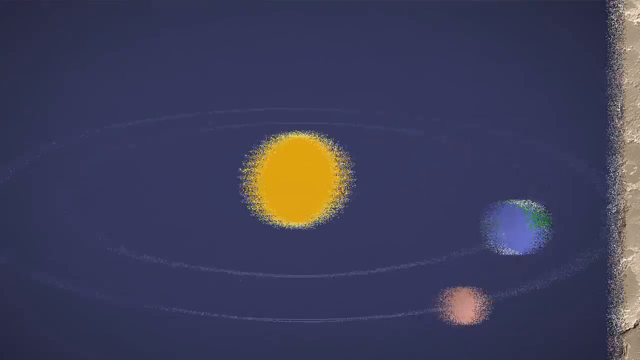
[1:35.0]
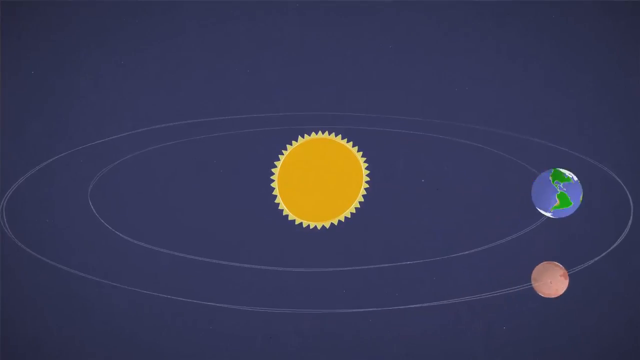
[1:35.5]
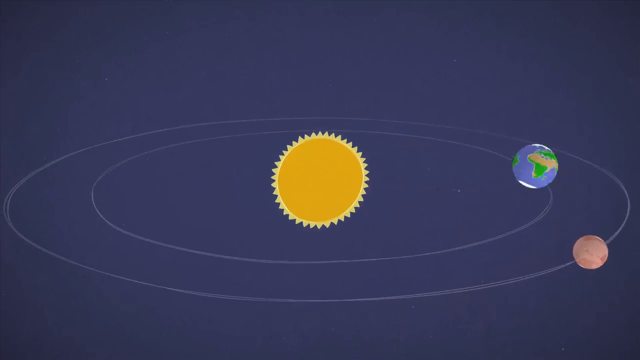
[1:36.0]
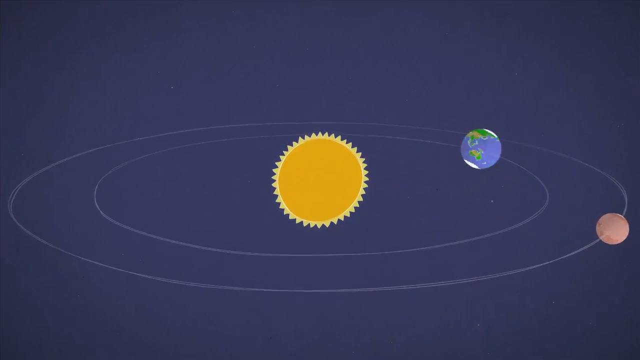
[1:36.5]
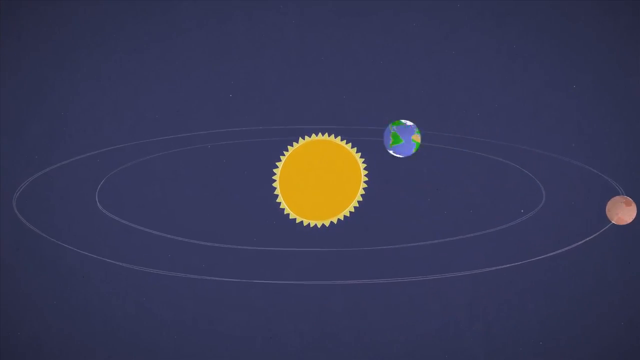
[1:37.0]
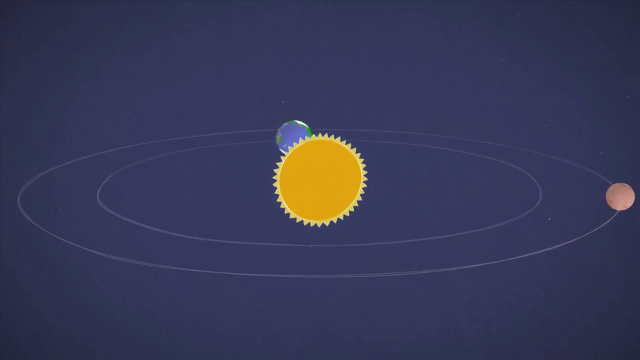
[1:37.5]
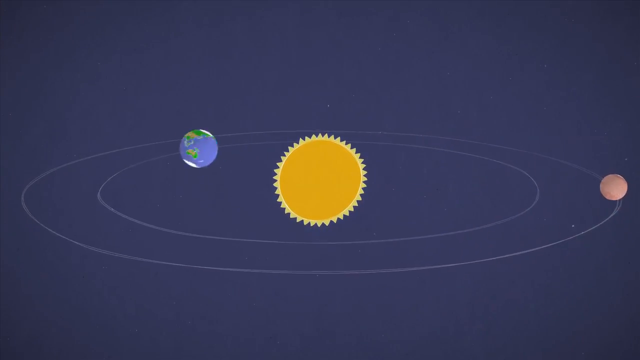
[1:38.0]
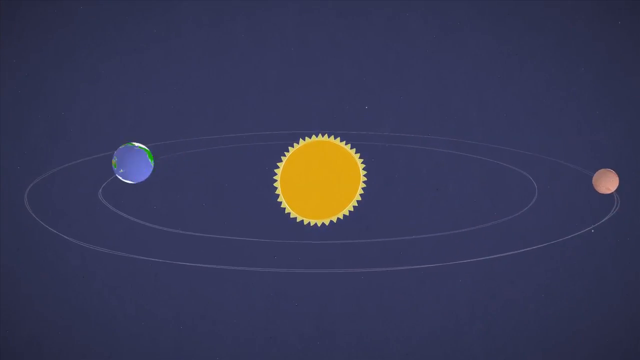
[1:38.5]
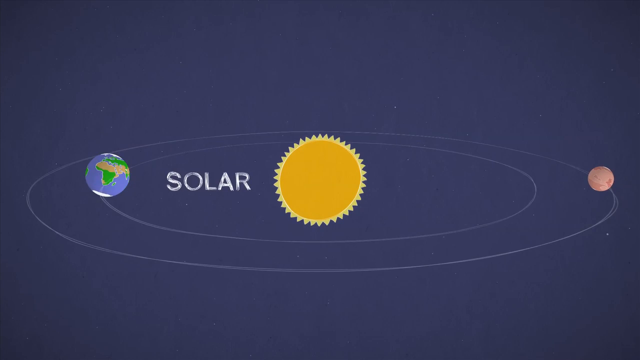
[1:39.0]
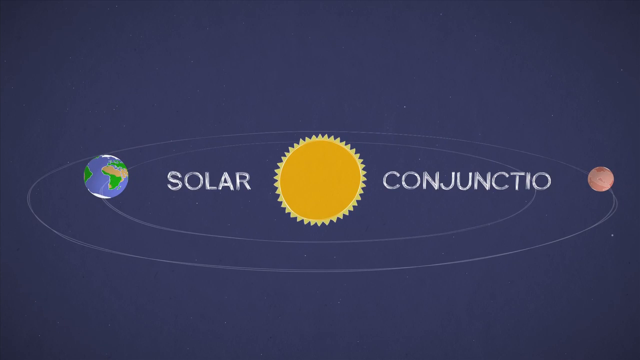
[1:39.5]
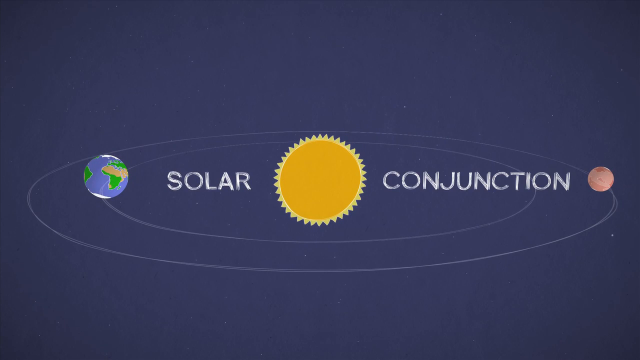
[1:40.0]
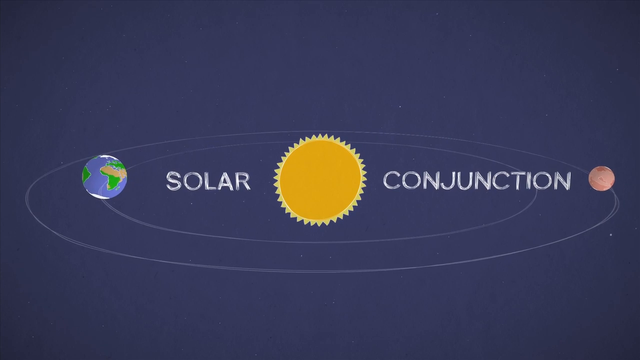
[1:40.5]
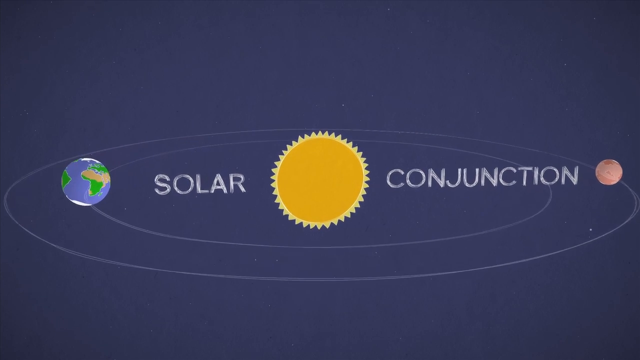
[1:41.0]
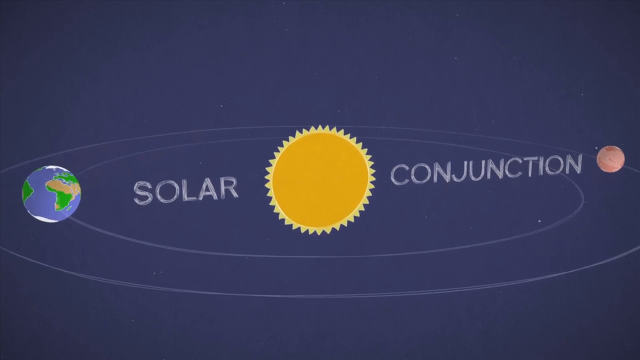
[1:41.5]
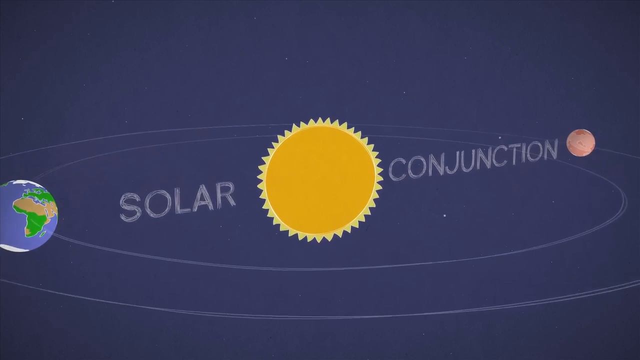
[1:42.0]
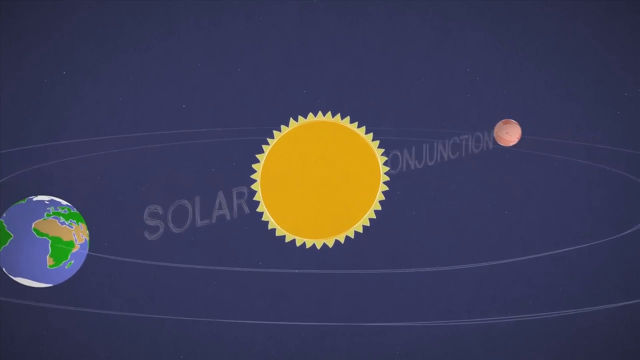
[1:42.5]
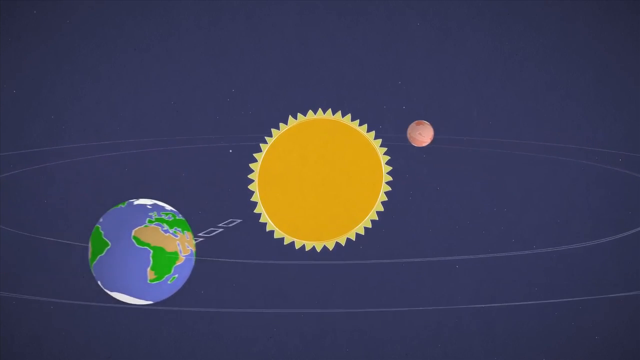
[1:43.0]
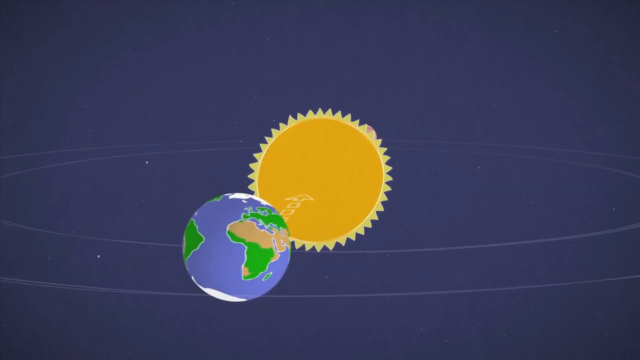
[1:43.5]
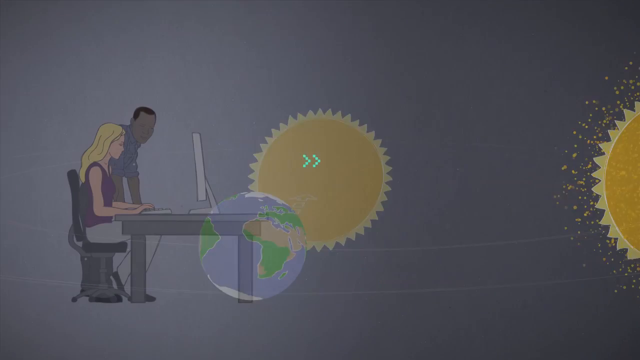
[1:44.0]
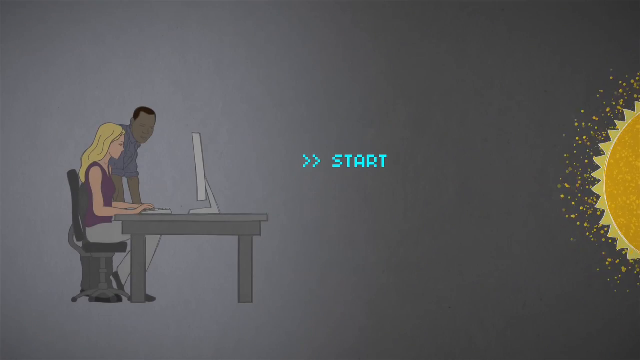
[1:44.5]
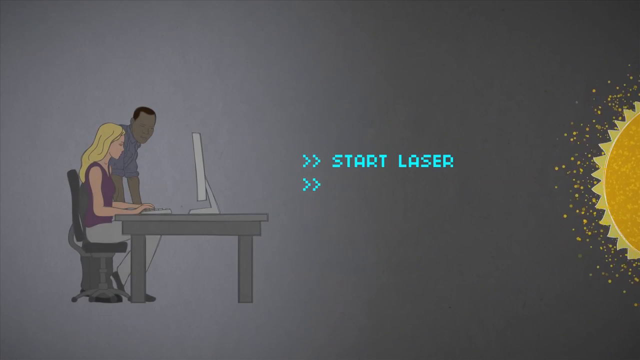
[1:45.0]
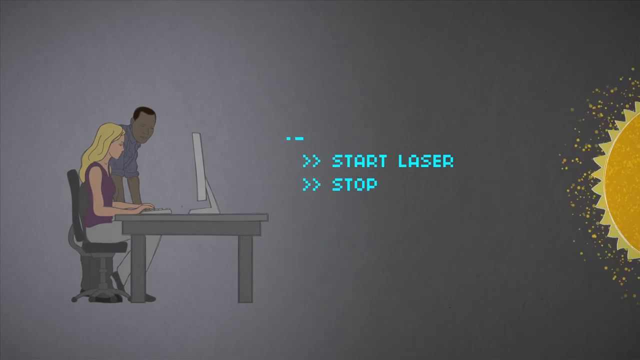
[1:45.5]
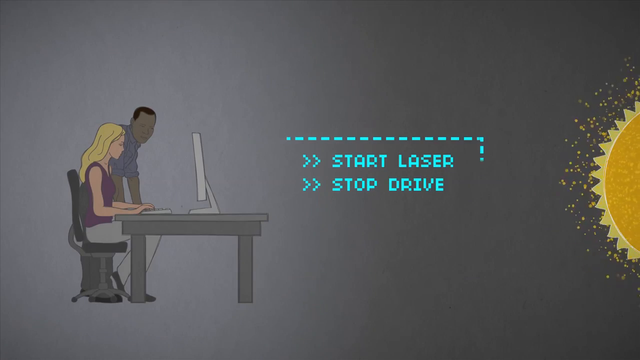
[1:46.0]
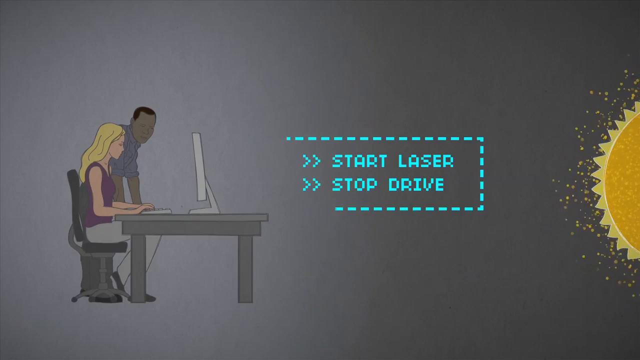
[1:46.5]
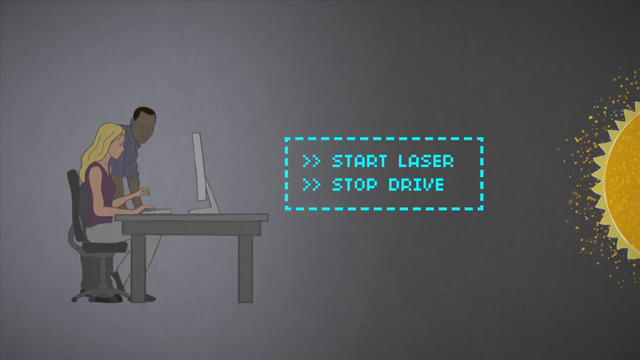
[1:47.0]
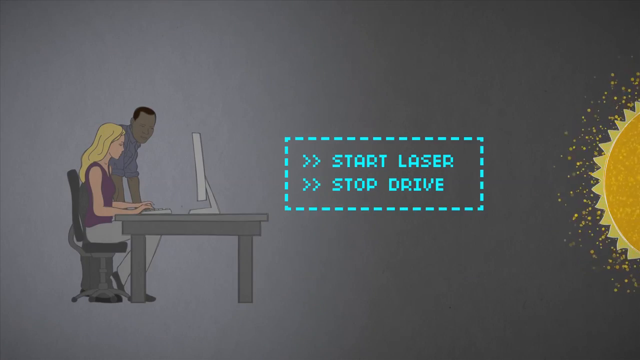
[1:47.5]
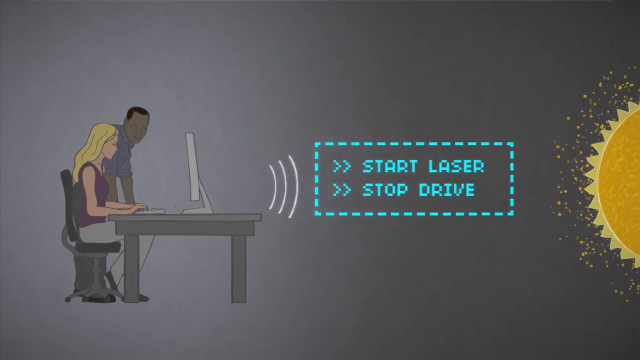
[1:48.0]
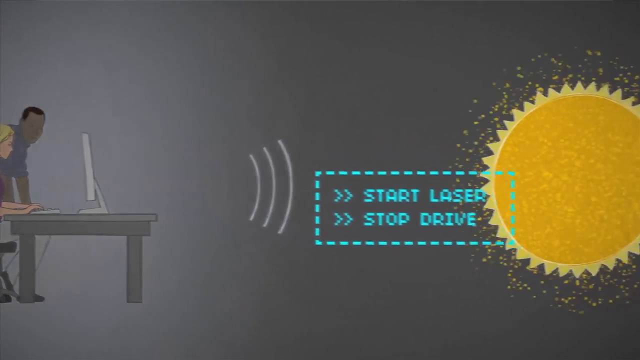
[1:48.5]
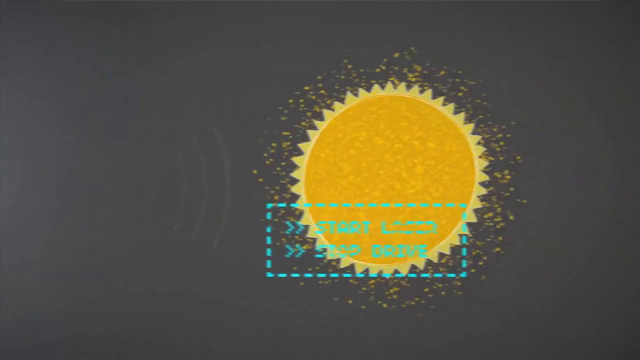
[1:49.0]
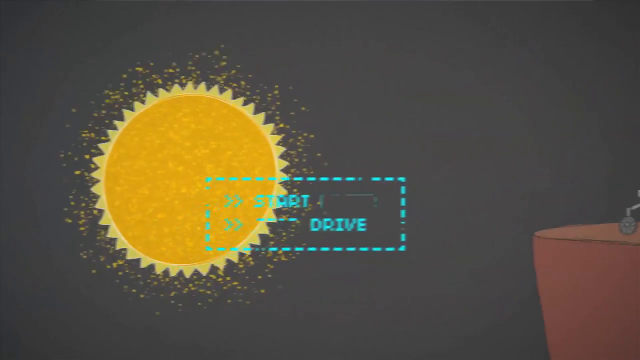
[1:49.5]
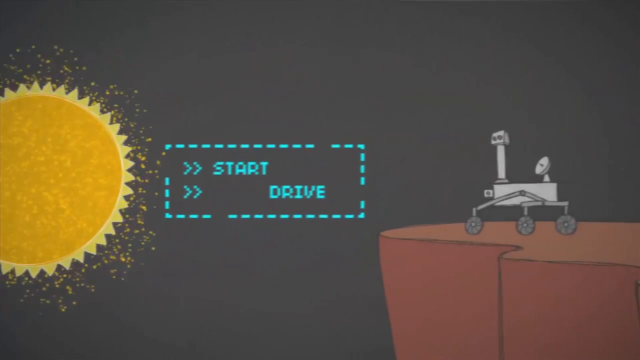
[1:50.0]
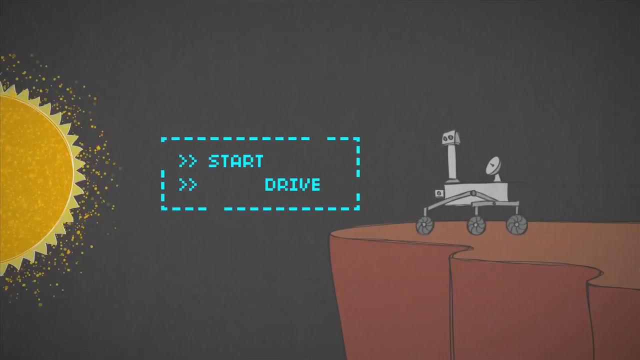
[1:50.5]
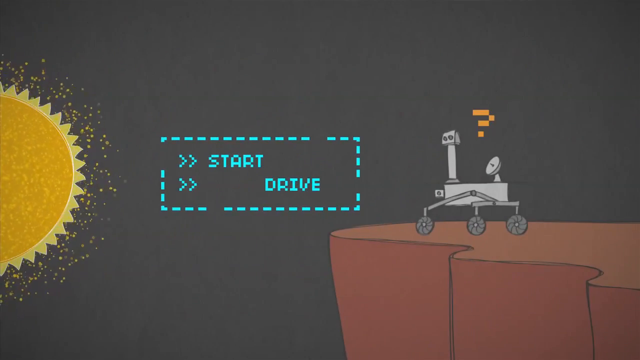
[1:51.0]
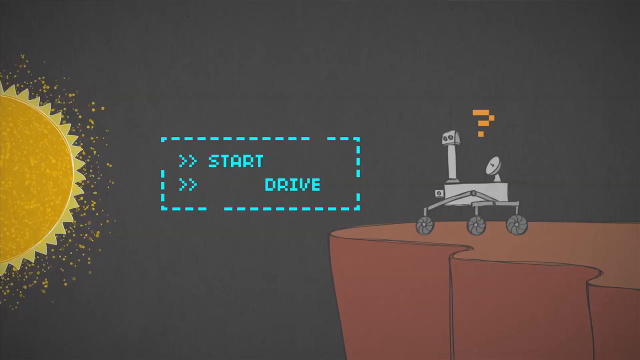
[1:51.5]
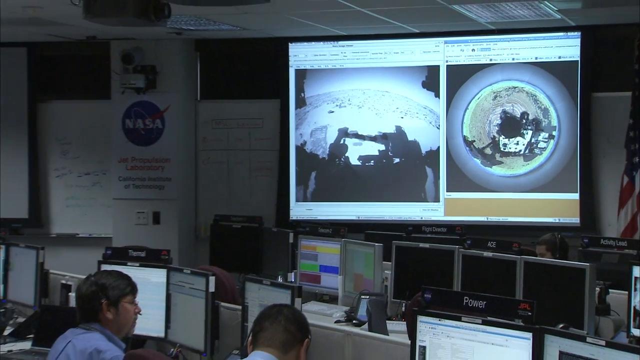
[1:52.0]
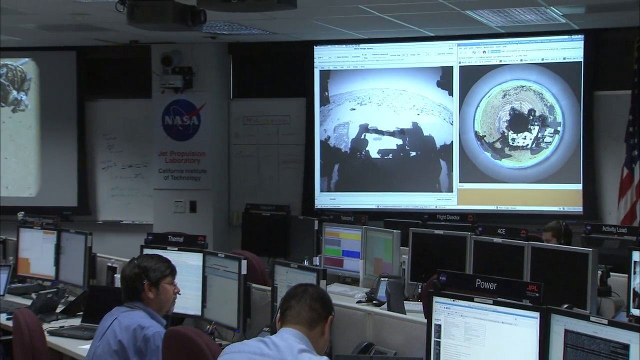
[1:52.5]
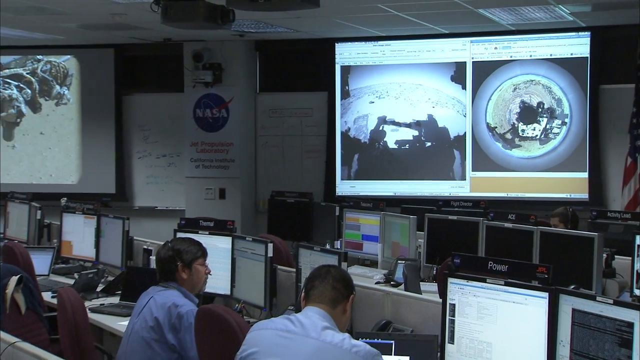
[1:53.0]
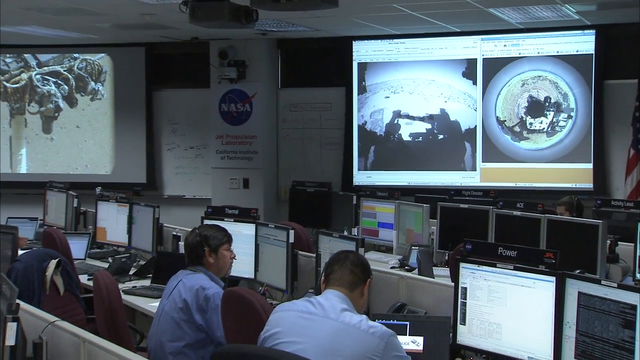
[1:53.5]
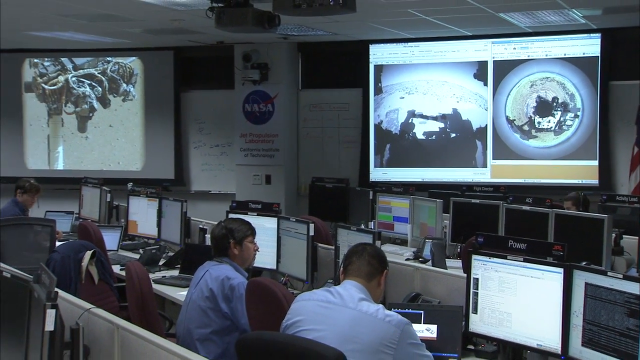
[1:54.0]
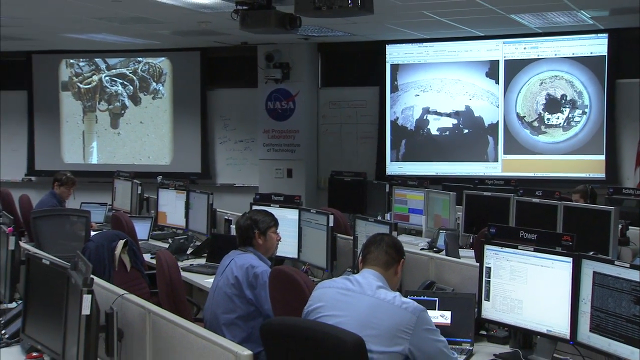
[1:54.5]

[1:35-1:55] A cartoon shows the Sun, Earth and Mars and their positions relative to each other, with Mars and Earth rotating around the Sun and ellipses showing their paths. The Sun is in the center, Earth is in the next ring, and Mars is in the far ring. Earth is then on the far left side and Mars on the far right side, with the text "solar conjunction", and then they shift around. The scene shifts to a cartoon of a man and a woman: the woman is seated at a desk using a computer, apparently typing, and the man is standing next to her. Text reads "START LASER" and then "STOP DRIVE", and it appears they are using signals to send the text around the Sun to the rover on Mars. The scene then switches to an actual photo of some sort of command center with a bunch of people at desks and computers, with screens in the background; it looks like NASA.